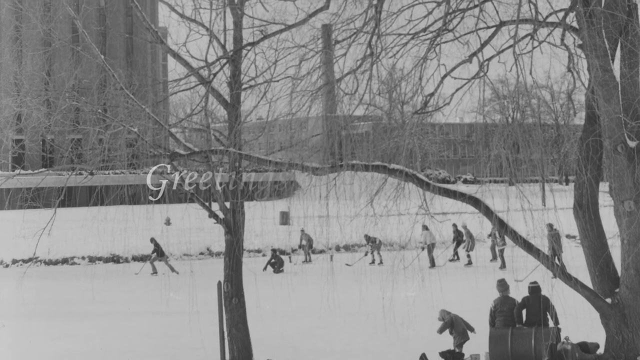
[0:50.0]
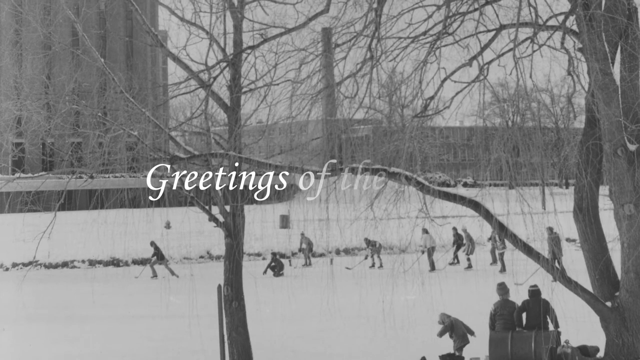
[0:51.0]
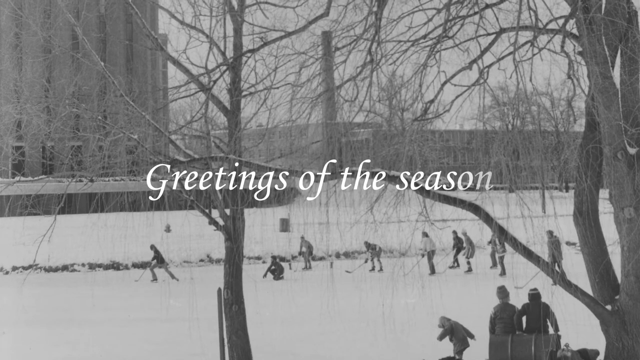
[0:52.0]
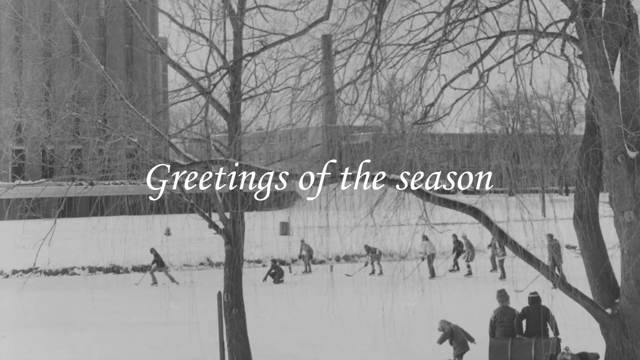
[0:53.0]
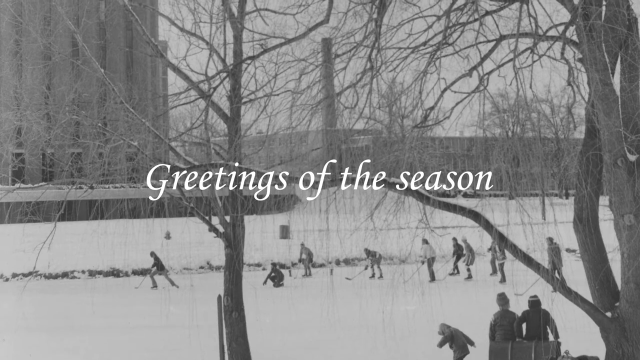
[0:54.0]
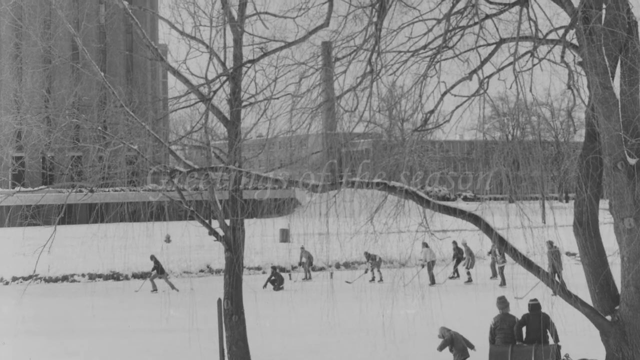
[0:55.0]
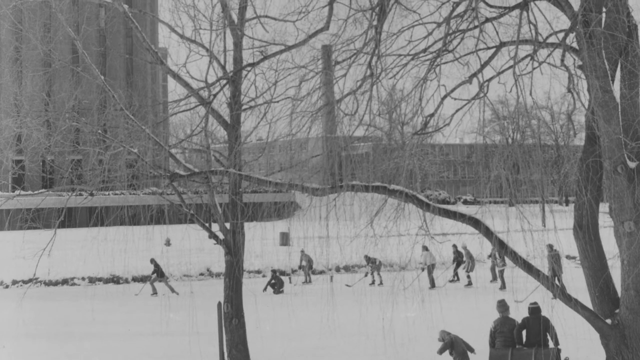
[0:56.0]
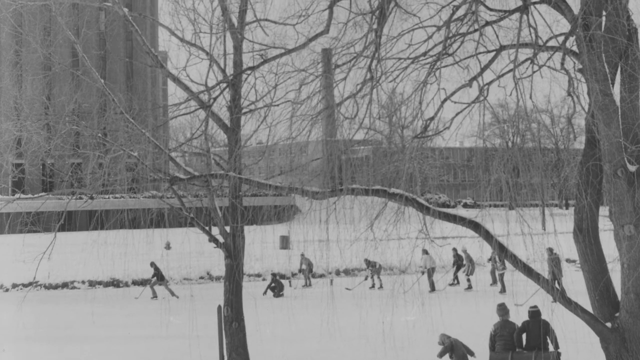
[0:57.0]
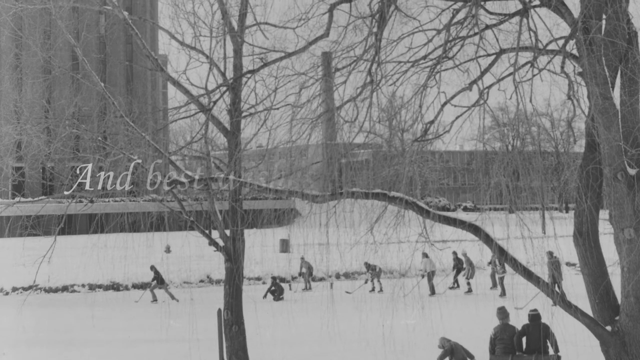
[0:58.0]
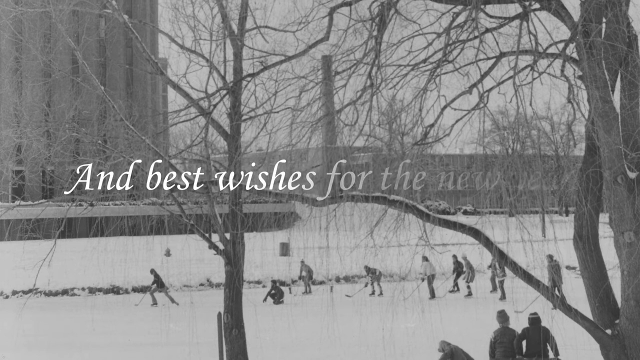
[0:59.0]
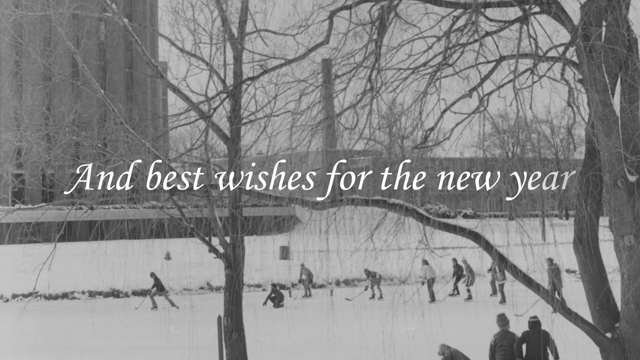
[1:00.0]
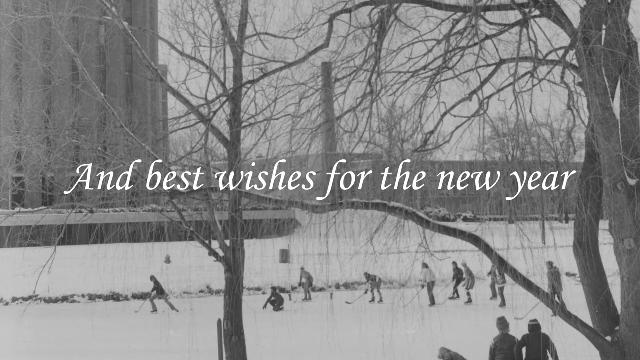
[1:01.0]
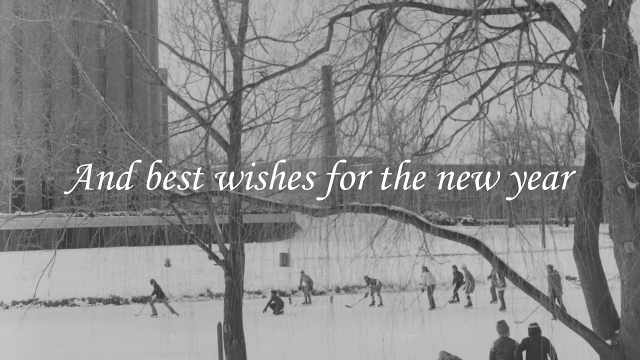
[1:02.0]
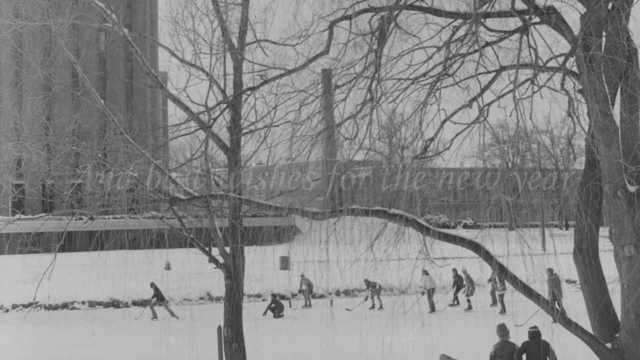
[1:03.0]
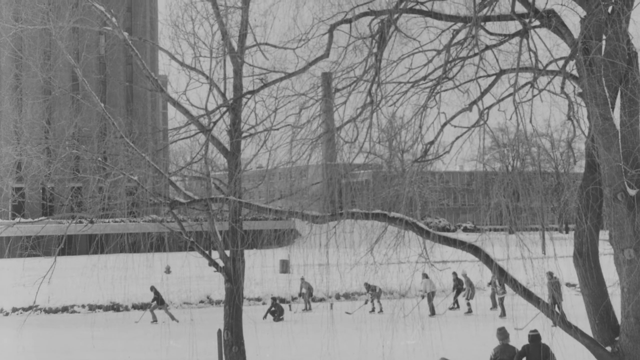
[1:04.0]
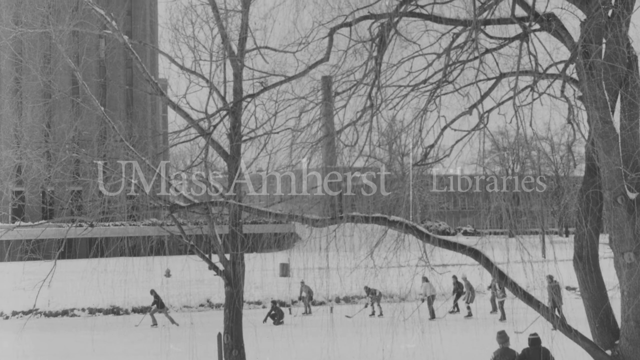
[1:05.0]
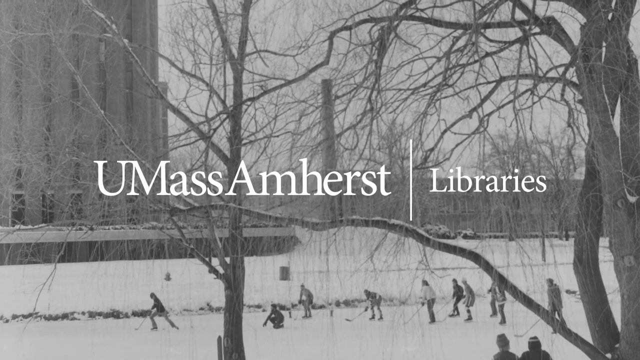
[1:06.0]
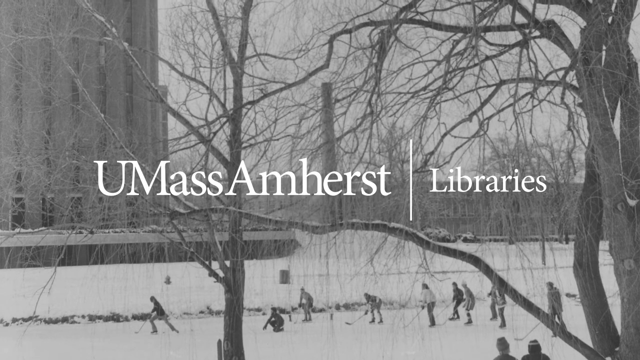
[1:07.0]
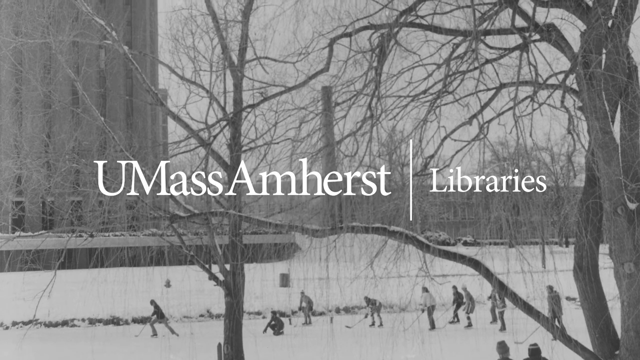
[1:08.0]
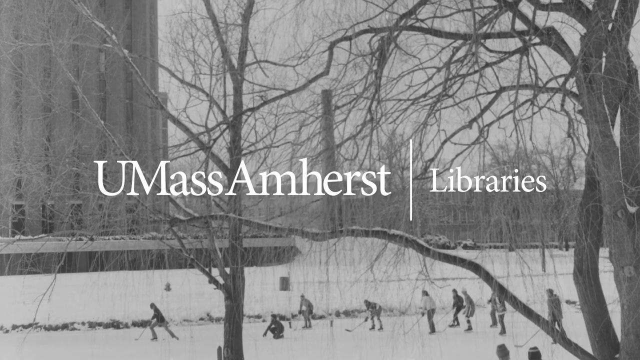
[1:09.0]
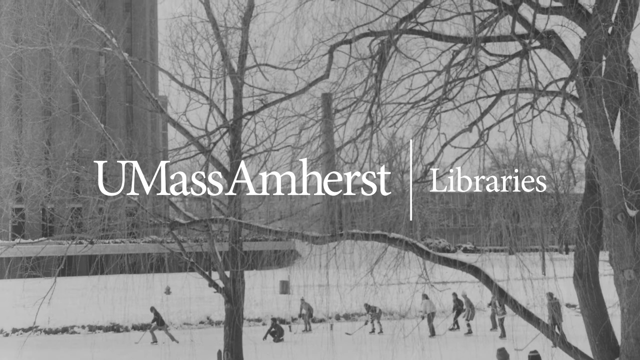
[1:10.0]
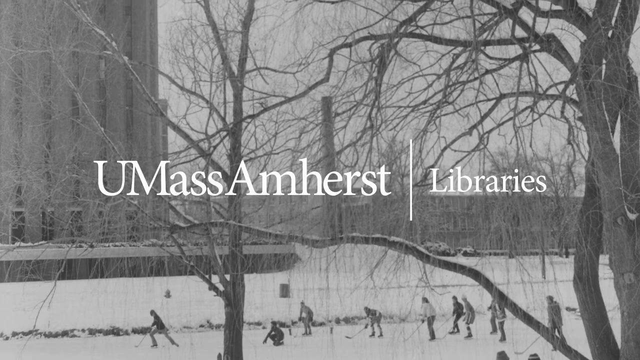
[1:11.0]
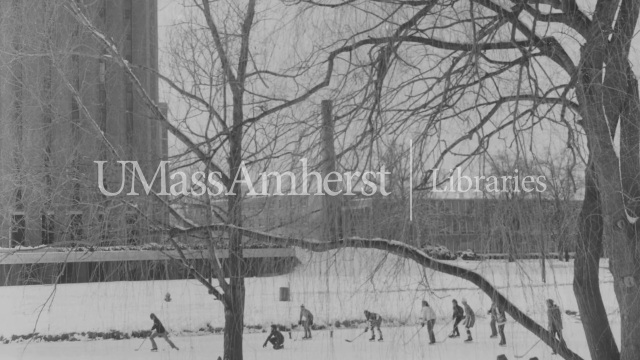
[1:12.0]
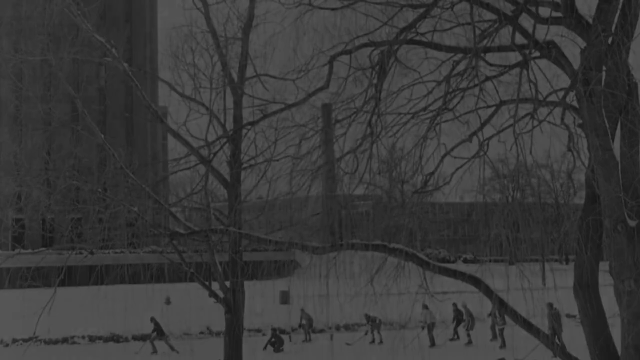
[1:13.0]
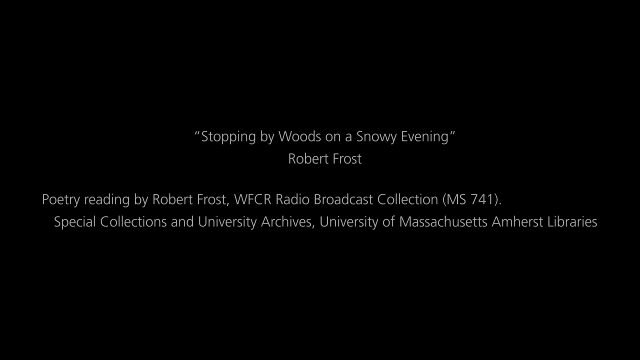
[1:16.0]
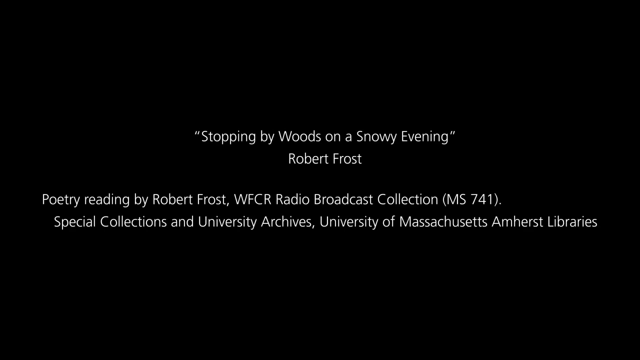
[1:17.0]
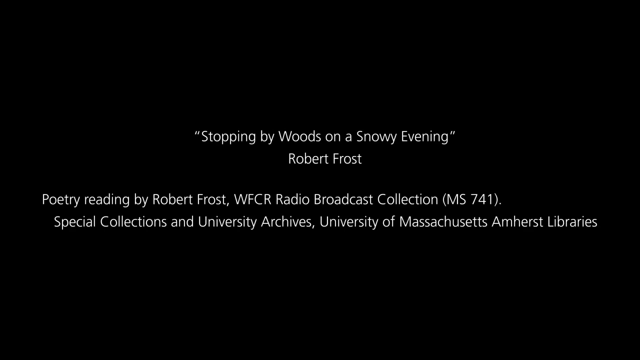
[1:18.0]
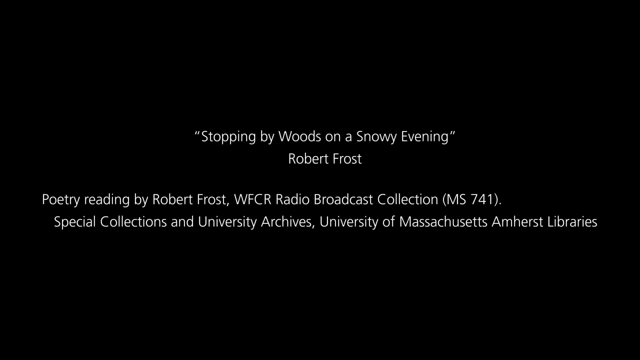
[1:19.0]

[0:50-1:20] The words "greetings of the season" appear in front of the hockey team with their various hockey sticks, the barren trees and the snow, in a font that looks like one typically used for Christmas in the United States. Next the text reads "and best wishes for the new year". The view moves up and the text reads "UMass Amherst libraries", and the view keeps looking up. The screen goes blank for a few seconds, then goes to black. The words "stopping by woods on a snowy evening by Robert Frost" appear, followed by "poetry reading by Robert Frost, WFCR radio broadcast collection MS741 special collections and university archives, University of Massachusetts Amherst libraries".